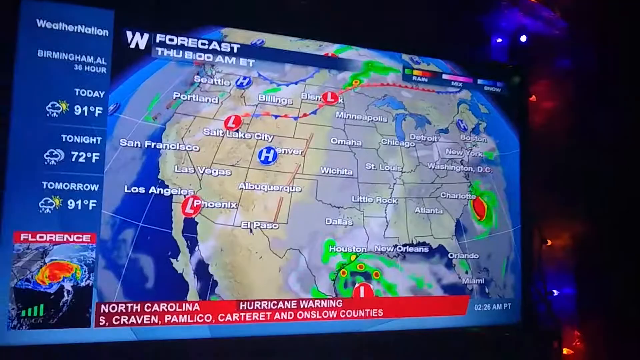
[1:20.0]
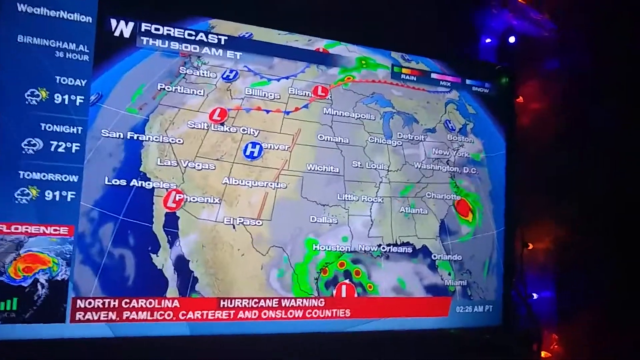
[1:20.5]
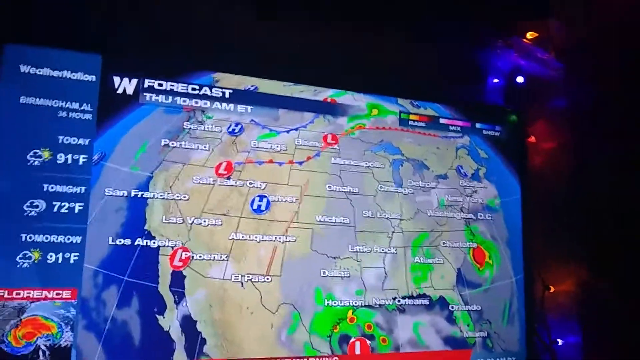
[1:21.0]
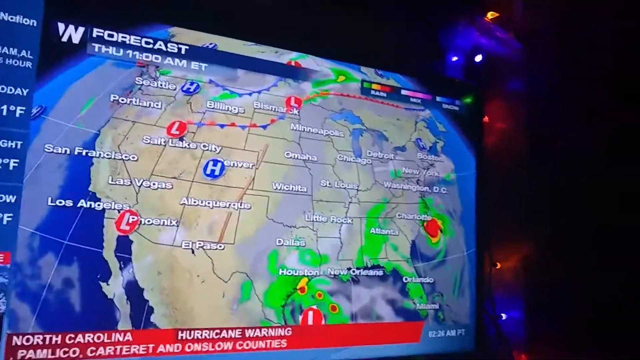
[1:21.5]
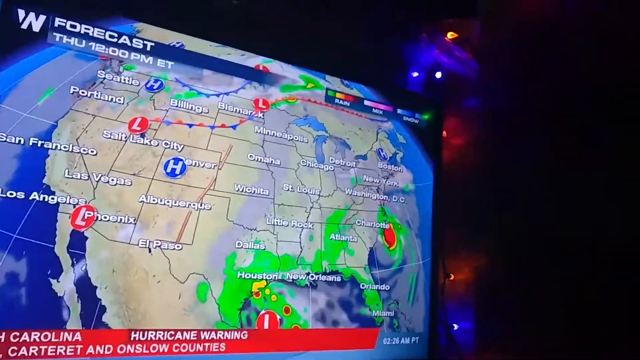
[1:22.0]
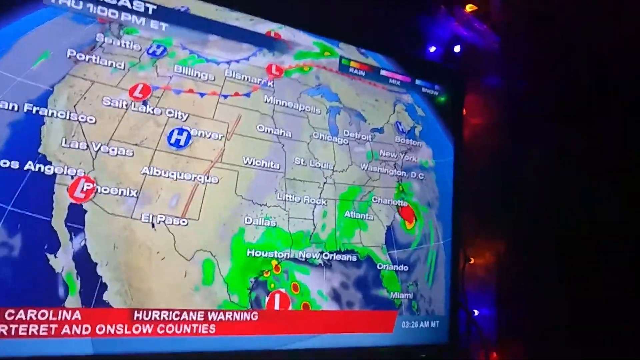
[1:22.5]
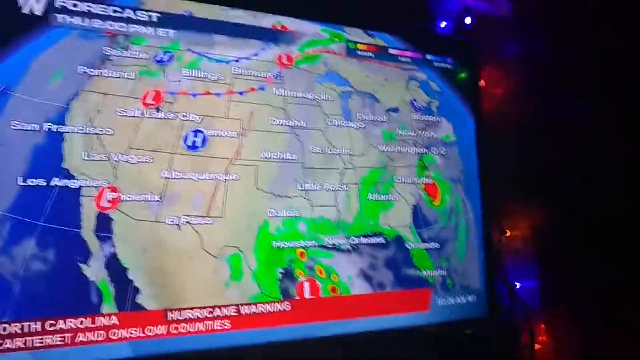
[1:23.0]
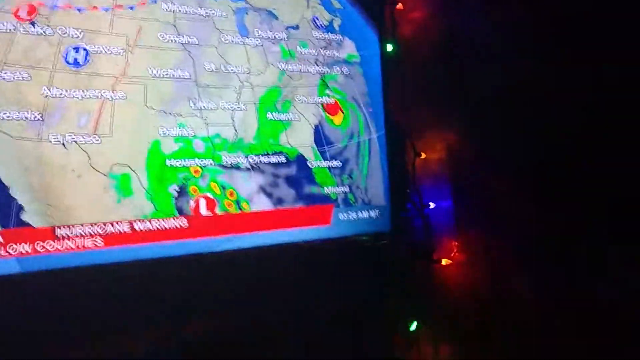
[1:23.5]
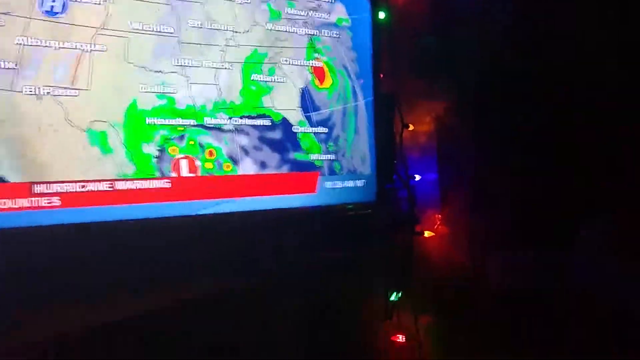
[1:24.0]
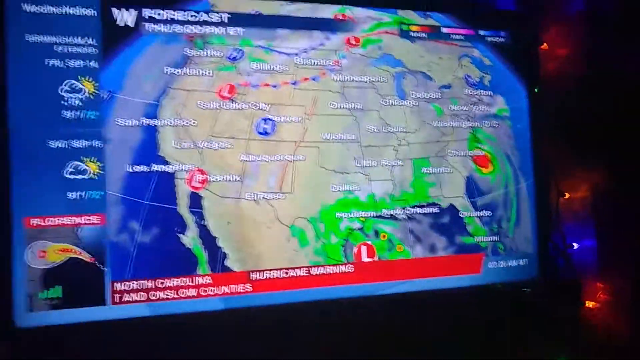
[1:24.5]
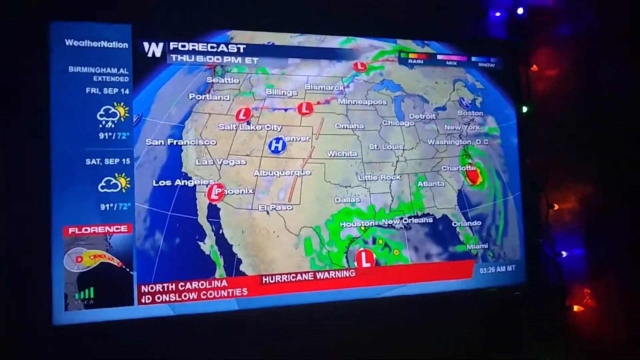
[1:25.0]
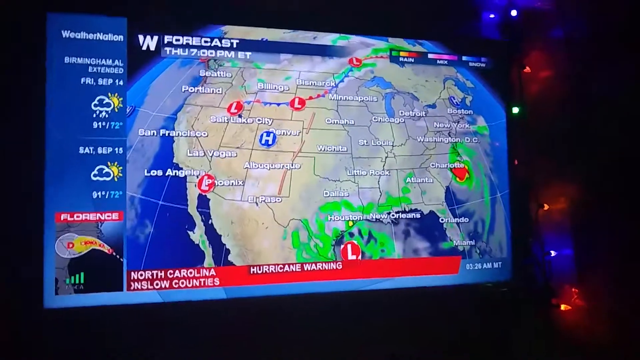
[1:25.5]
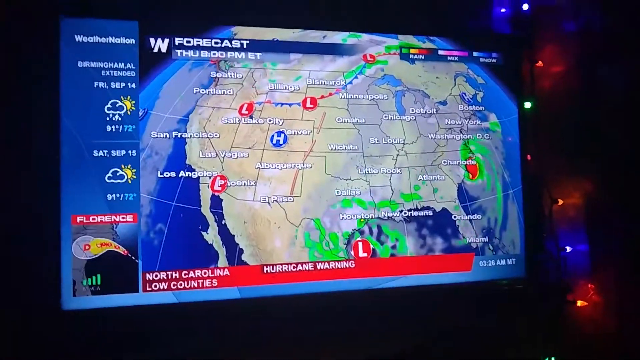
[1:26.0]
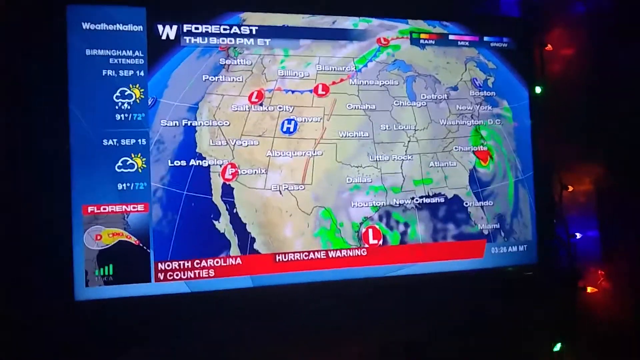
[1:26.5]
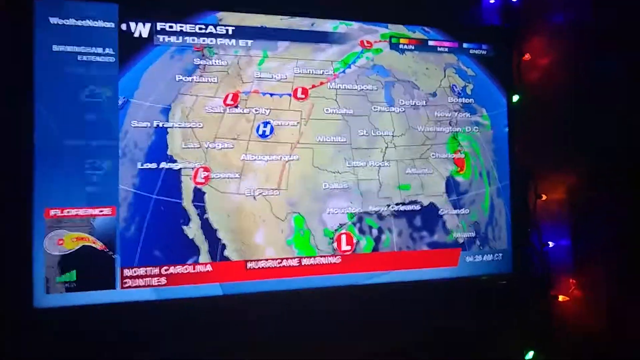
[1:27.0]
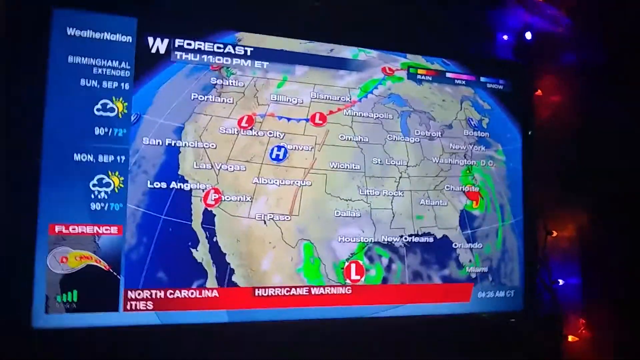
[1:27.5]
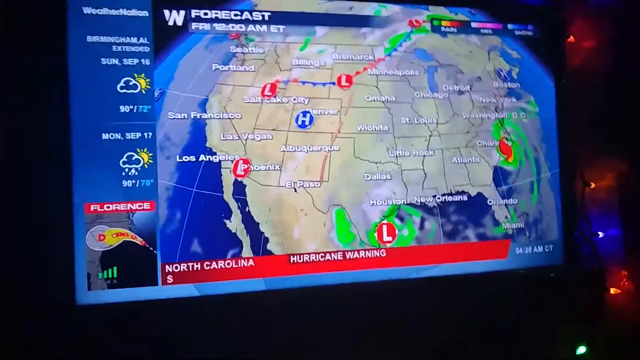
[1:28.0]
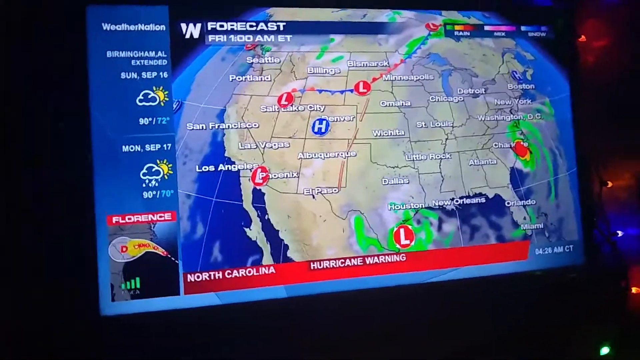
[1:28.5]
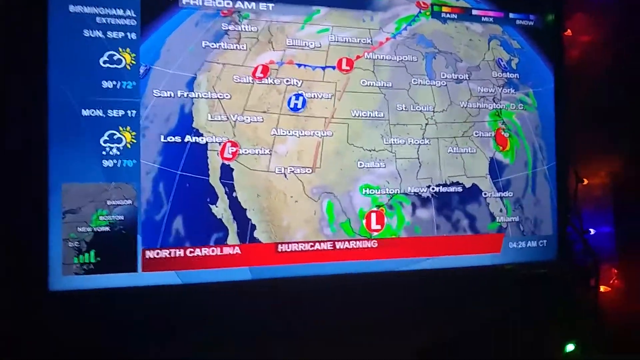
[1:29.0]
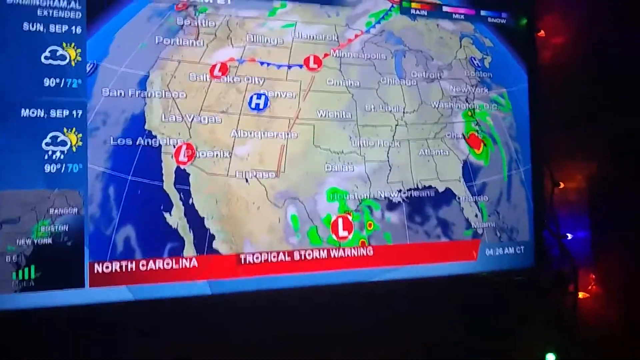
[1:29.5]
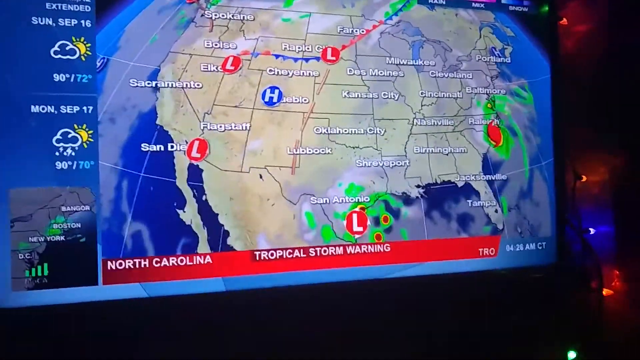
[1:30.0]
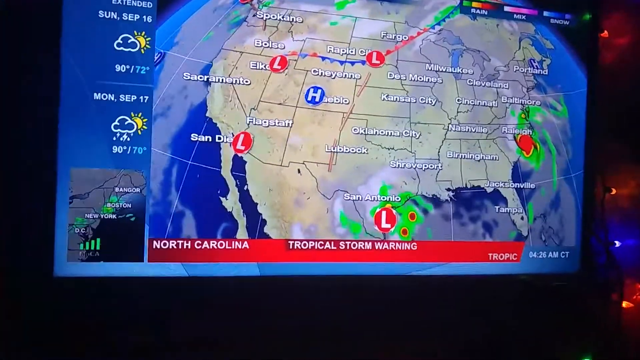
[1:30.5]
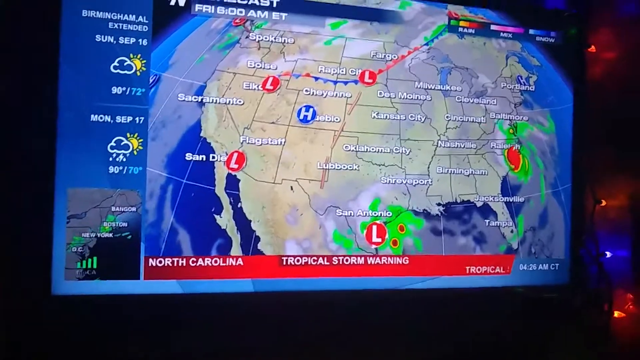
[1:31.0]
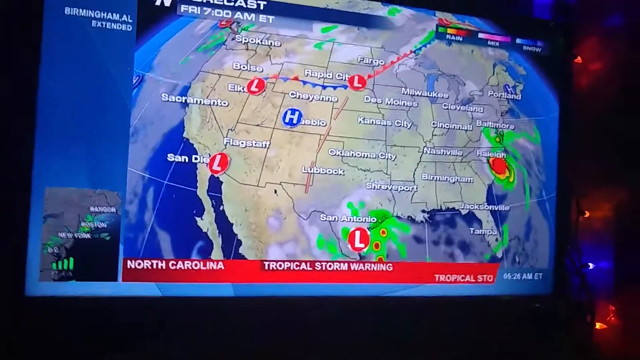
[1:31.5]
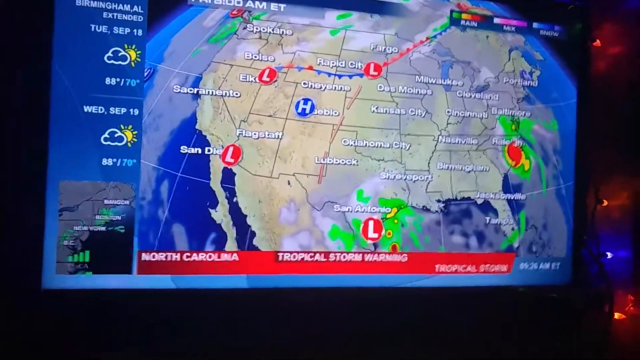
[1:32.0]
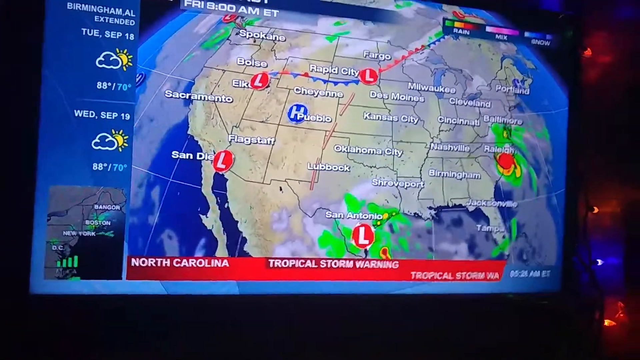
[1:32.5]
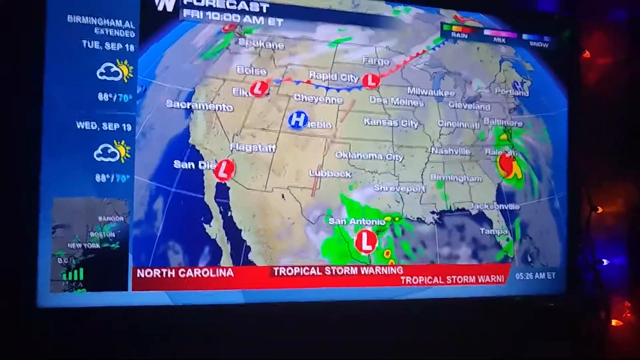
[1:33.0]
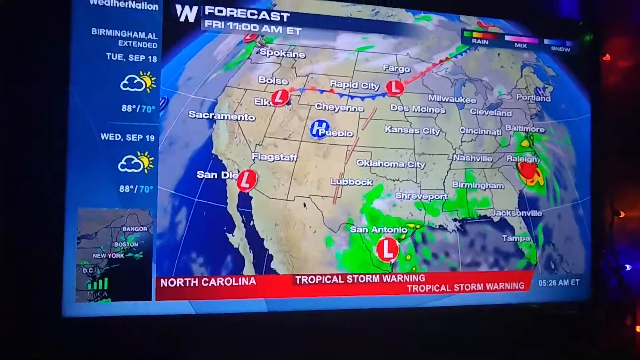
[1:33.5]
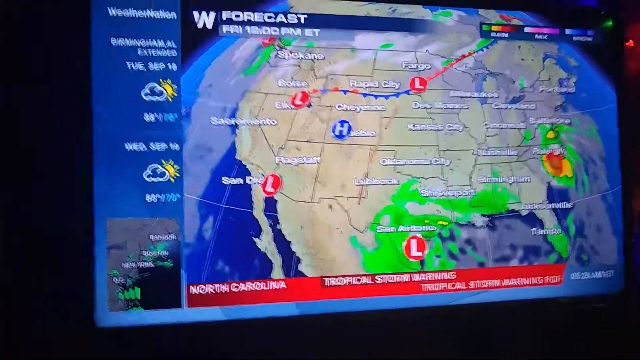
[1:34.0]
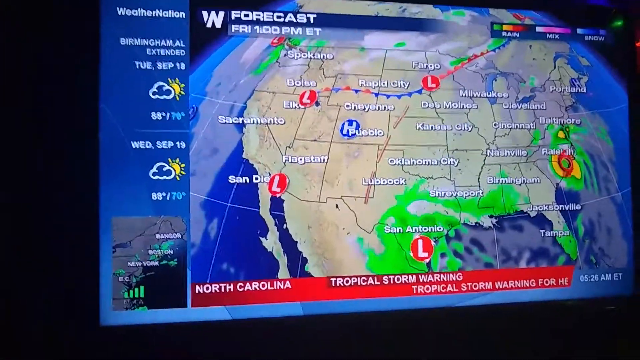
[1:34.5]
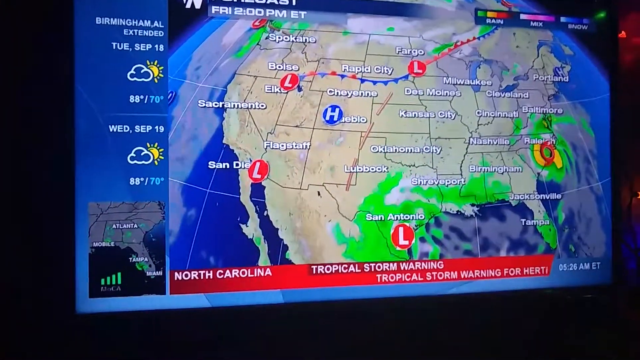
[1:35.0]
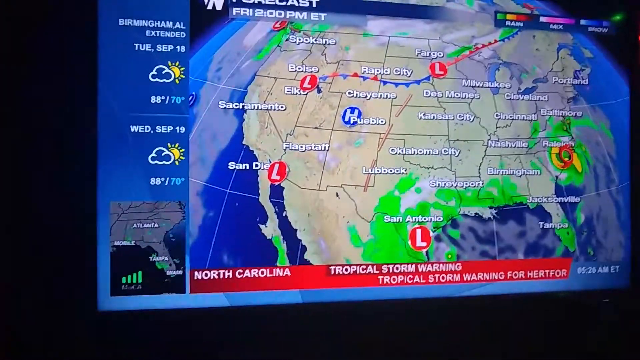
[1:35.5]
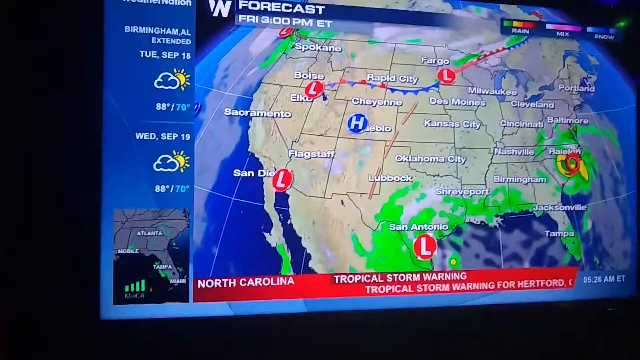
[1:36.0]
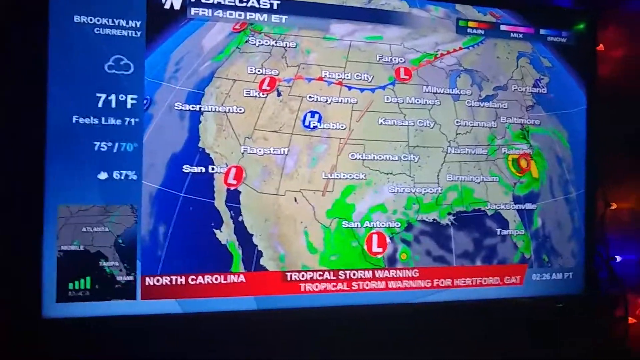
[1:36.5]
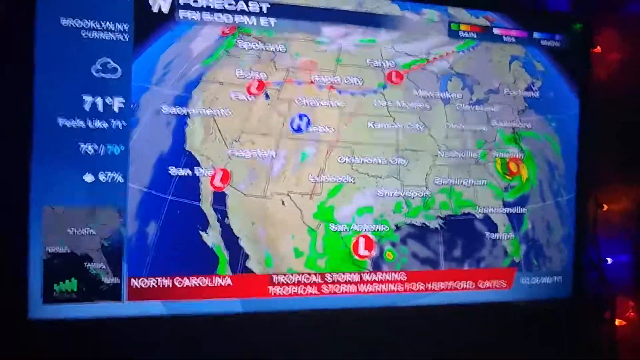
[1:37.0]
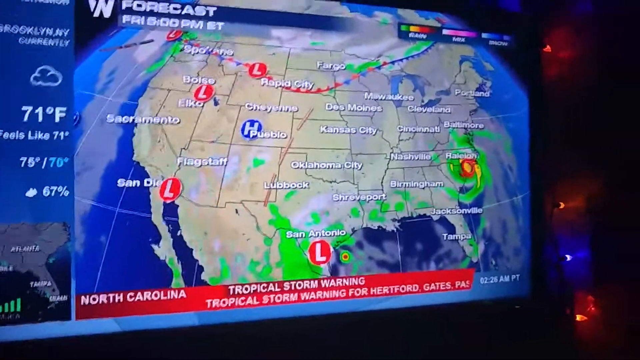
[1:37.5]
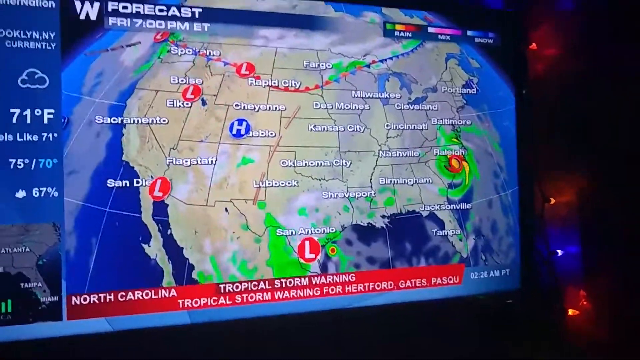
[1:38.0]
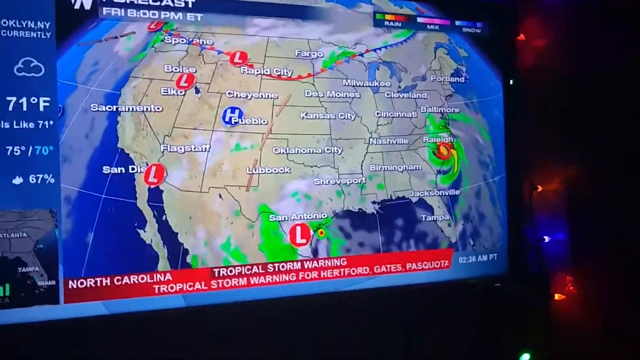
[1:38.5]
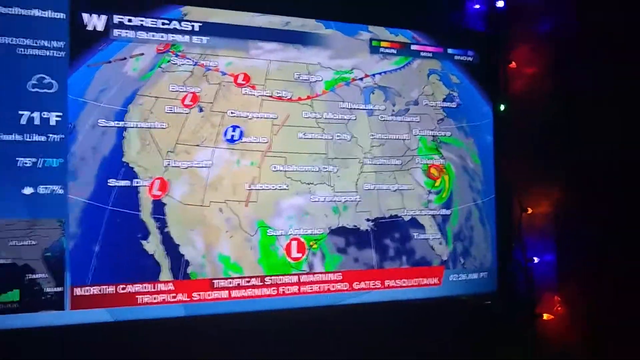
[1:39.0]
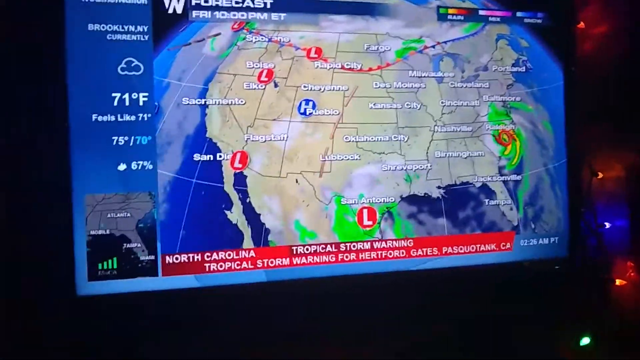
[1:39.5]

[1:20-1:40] The forecast map of the U.S. shows green areas coming in from the coastline into Texas and other areas in the south, and green areas near the coast of Carolina making landfall and moving north and west. The green areas in the south continue through Texas and into Mexico, covering most of the visible part of Mexico. The snaking line in the north undulates a bit and the red L icons move about, while the H over the Midwest moves slightly north. The time the forecast pertains to is at the top left but is slightly off camera, as the camera points mostly towards the bottom of the screen. The green area near the Carolina has the spinning hurricane icon in its center.